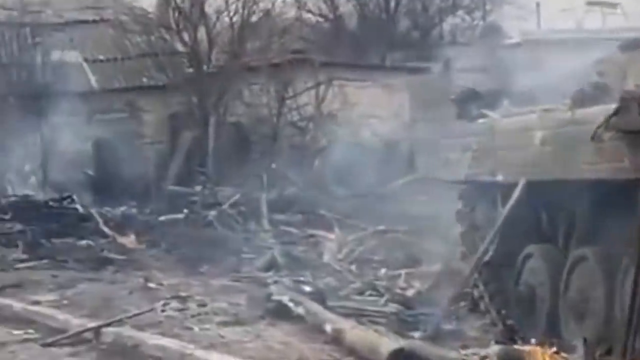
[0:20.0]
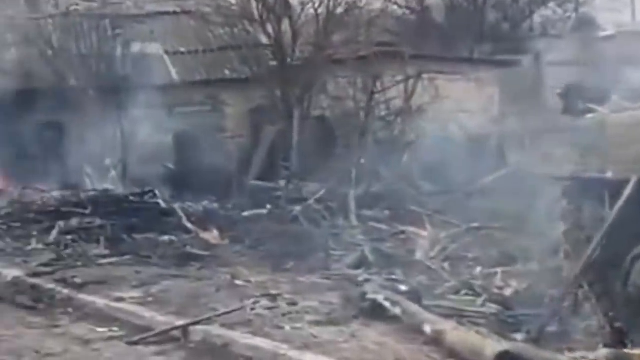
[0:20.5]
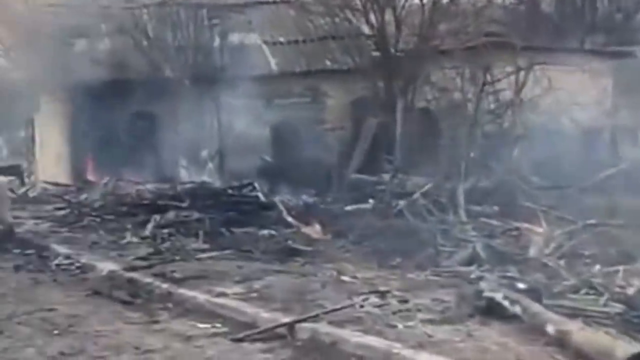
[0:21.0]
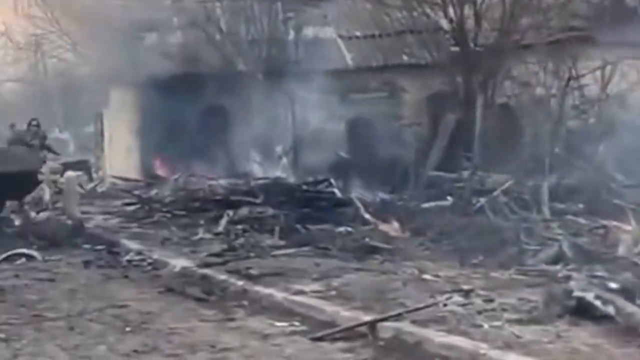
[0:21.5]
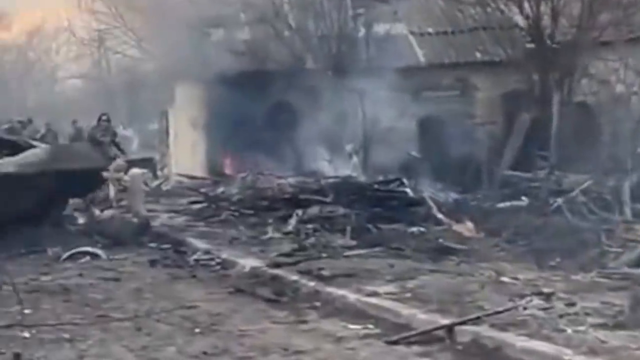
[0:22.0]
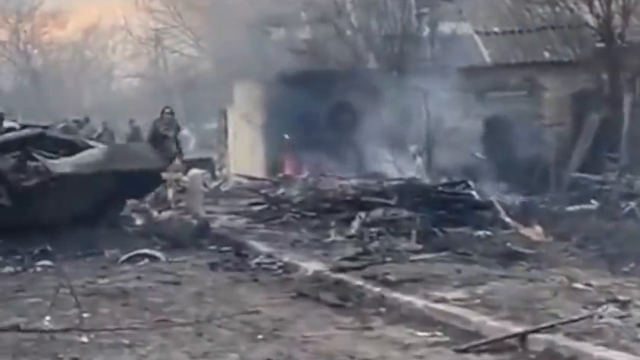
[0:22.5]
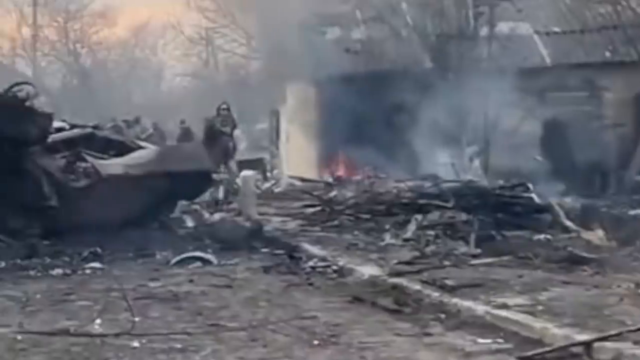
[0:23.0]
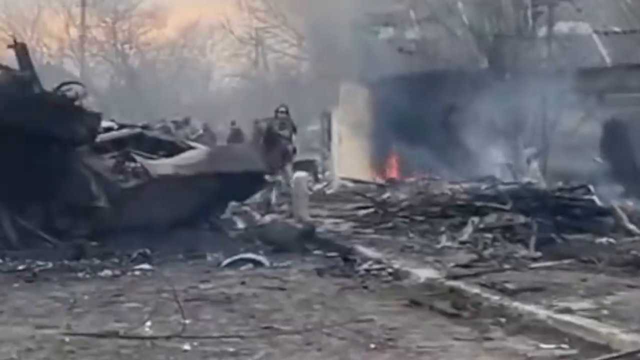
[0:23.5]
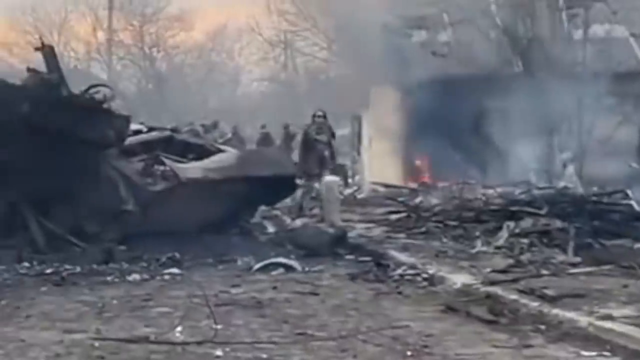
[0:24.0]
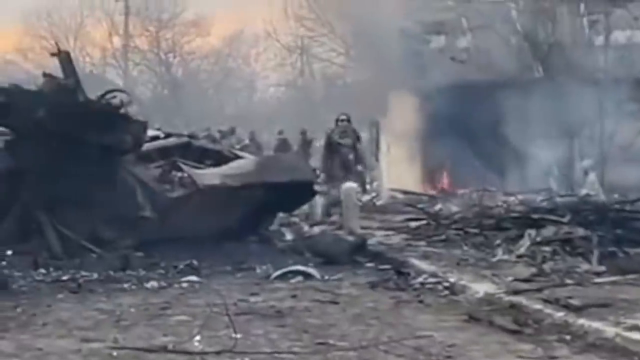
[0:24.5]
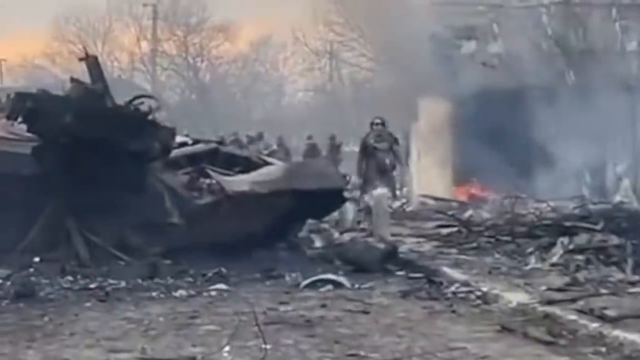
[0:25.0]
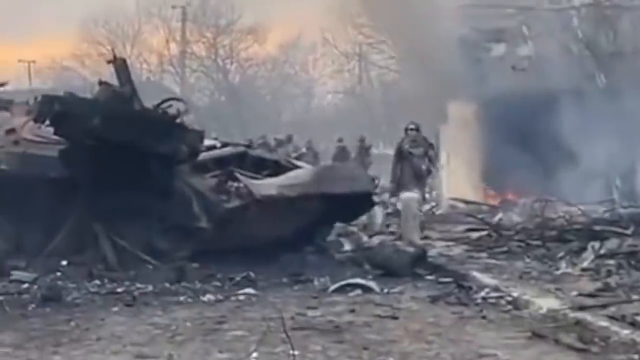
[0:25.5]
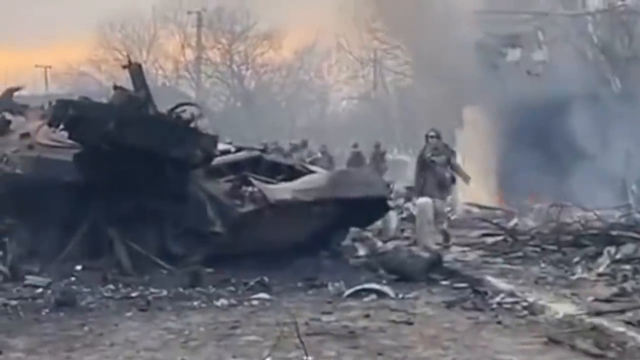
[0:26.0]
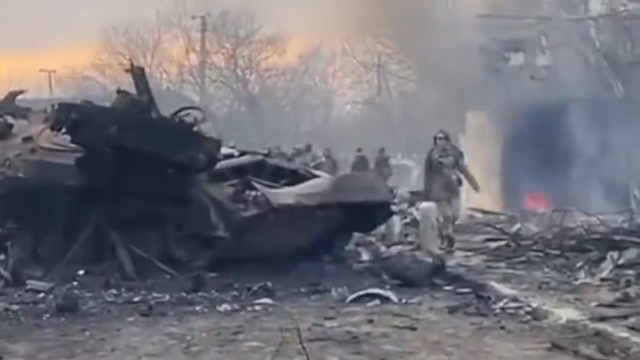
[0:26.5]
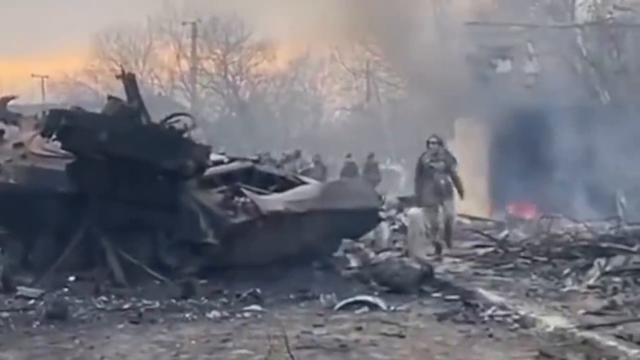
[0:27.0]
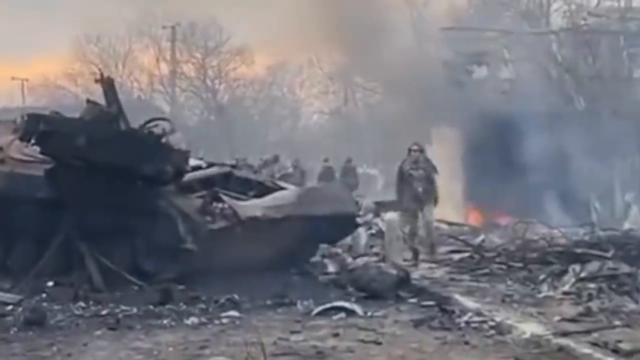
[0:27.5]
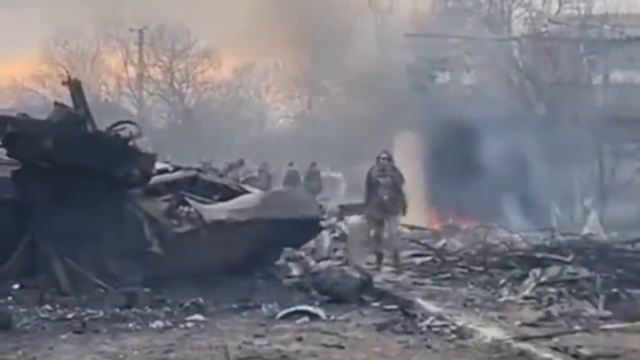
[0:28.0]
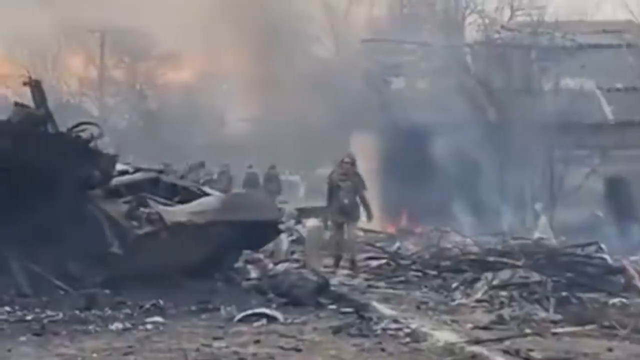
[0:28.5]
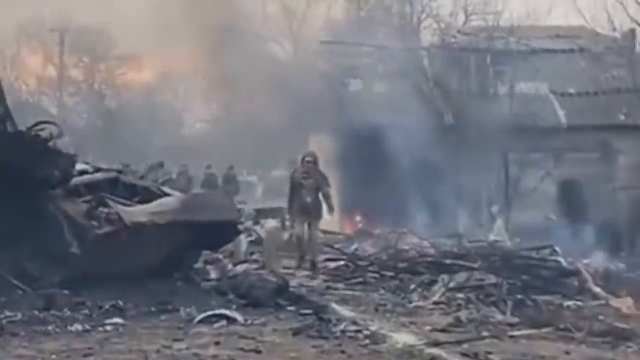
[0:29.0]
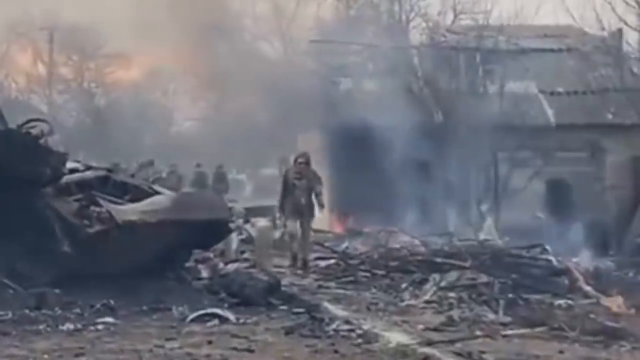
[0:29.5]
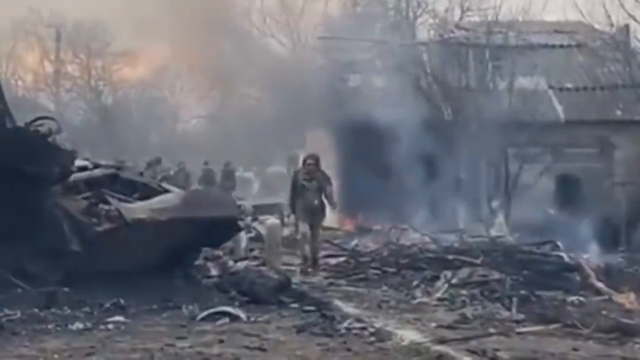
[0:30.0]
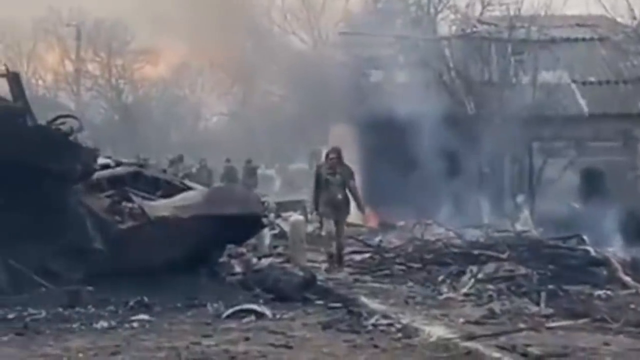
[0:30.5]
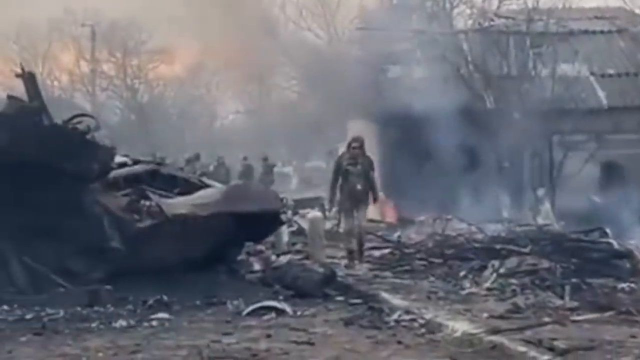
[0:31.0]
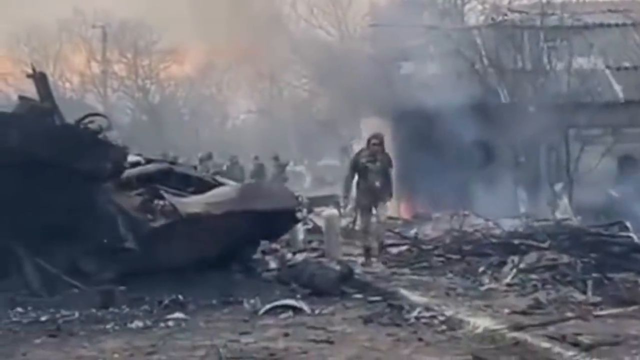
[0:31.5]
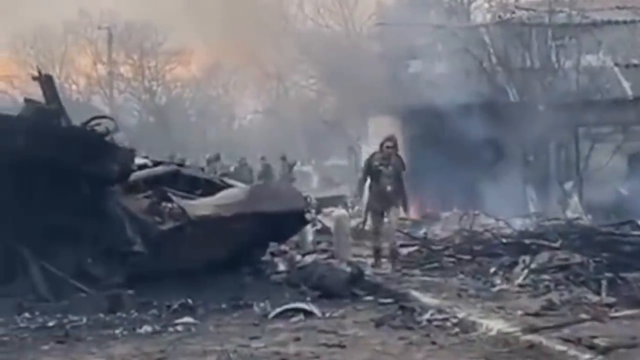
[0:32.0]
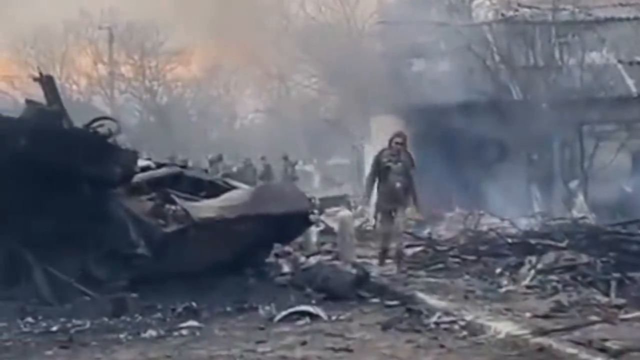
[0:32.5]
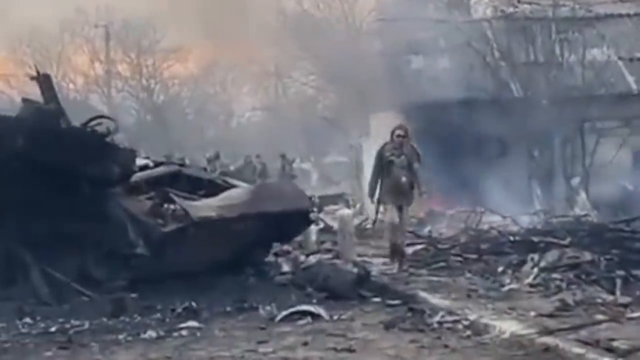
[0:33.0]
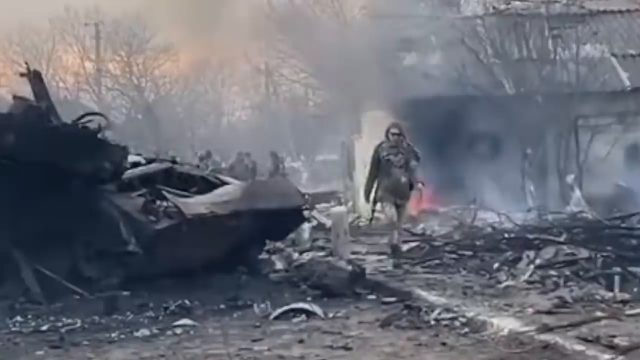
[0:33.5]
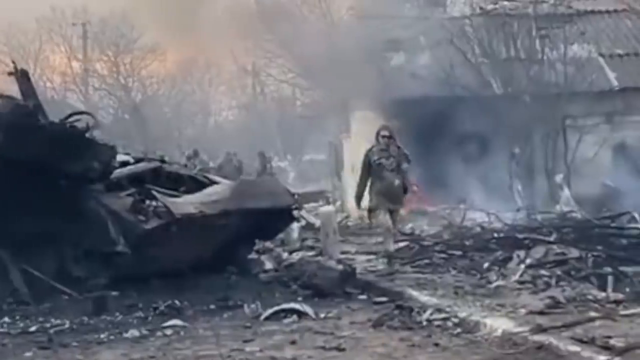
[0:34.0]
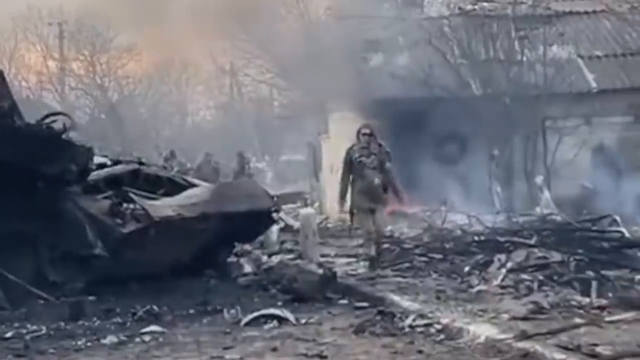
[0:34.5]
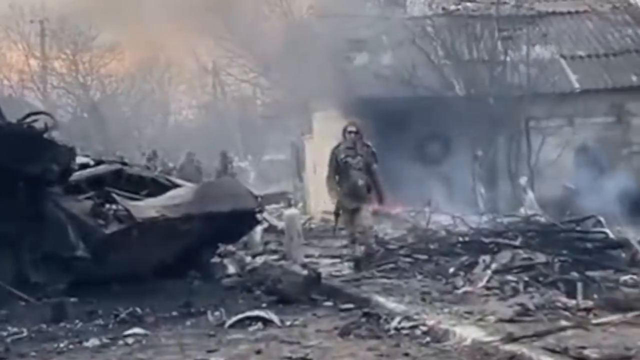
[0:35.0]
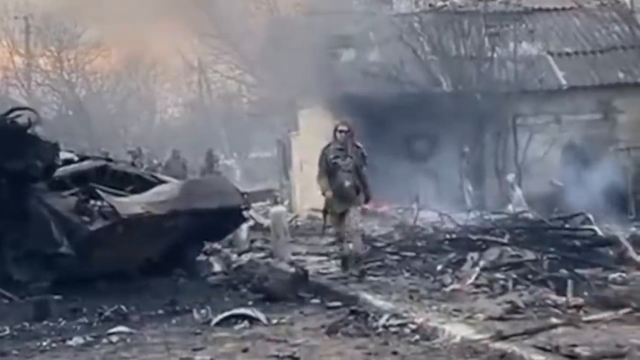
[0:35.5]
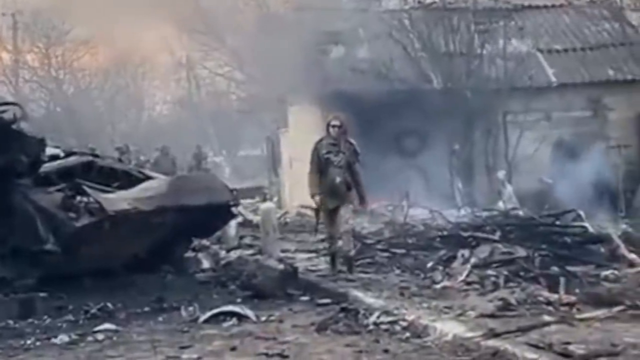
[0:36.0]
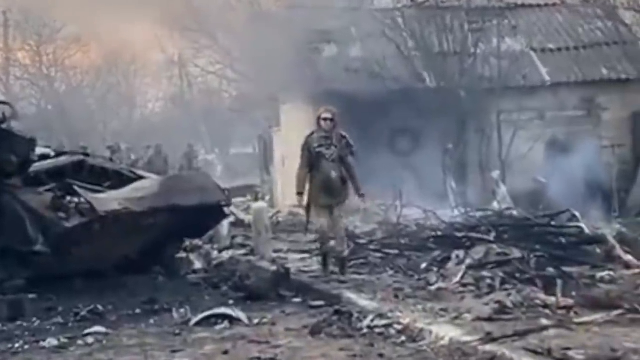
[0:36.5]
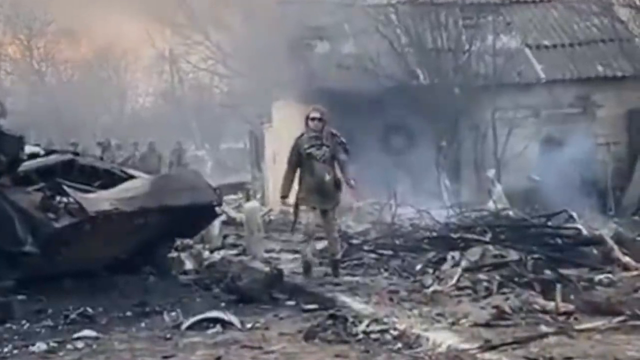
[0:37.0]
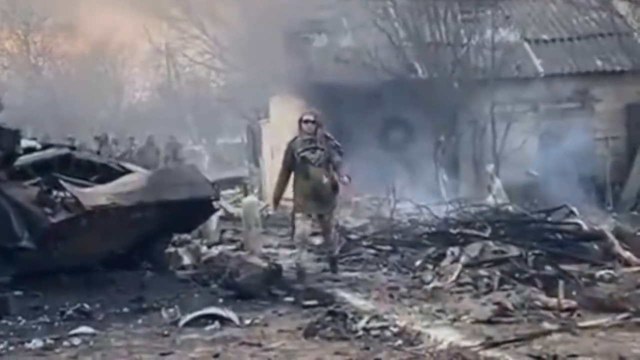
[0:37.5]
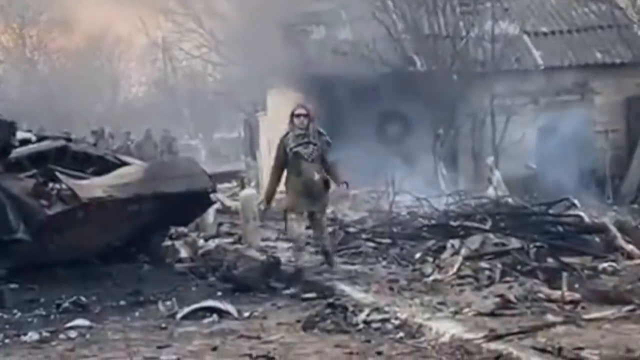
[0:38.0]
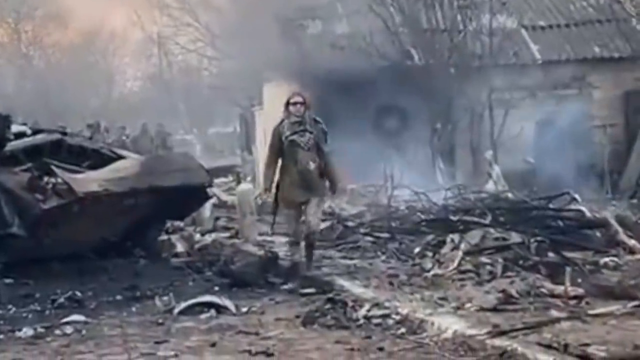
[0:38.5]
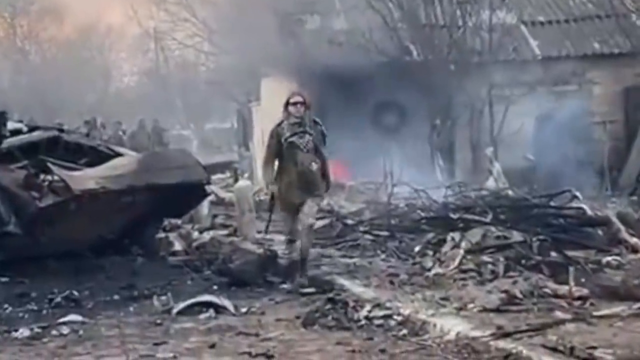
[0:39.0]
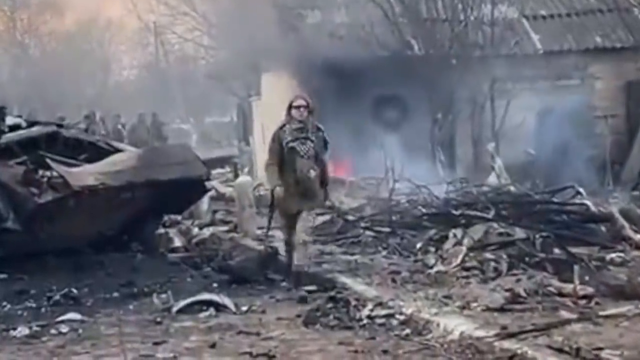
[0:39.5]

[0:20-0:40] In the same area, a woman who looks like a civilian walks toward the camera, wearing what looks to be normal clothes. She walks around the wreckage of the tanks and seems unconcerned. She has a rifle strapped to her back as she walks among the fires and flames, with the war-torn area behind her. There appear to be some soldiers behind her. She walks in slow motion toward the camera amid the destroyed tanks and exploded houses.